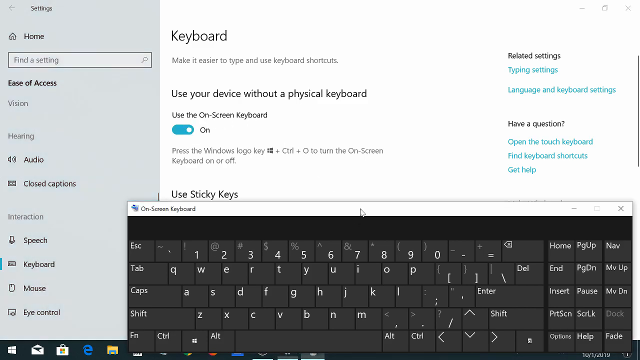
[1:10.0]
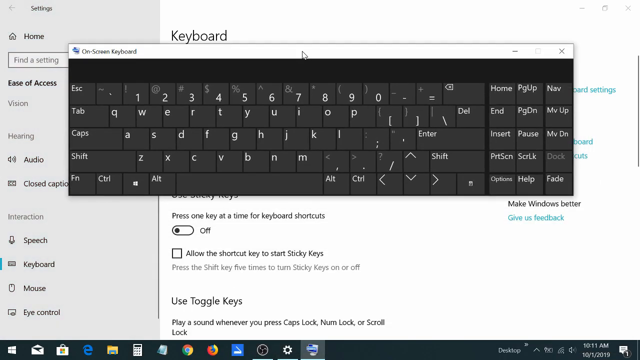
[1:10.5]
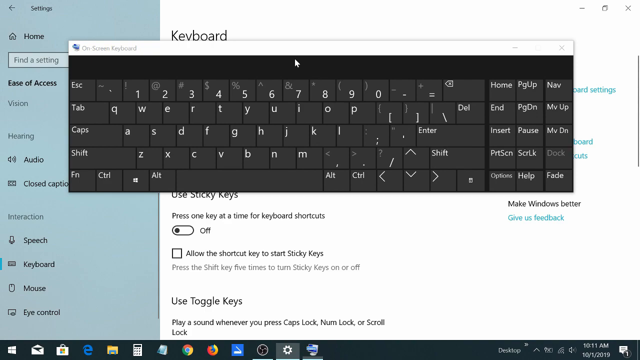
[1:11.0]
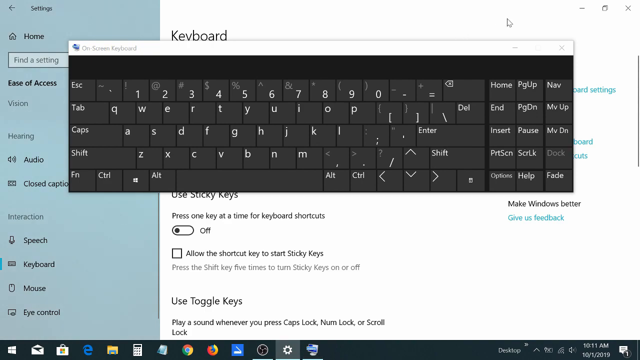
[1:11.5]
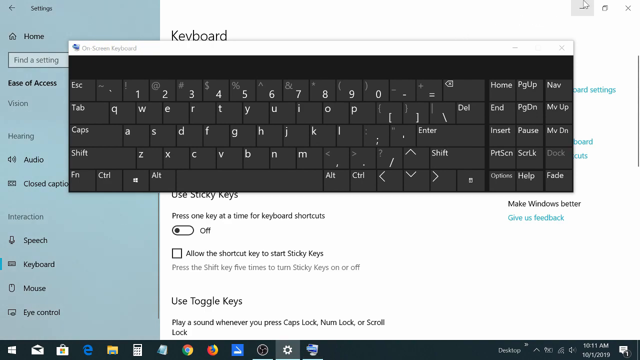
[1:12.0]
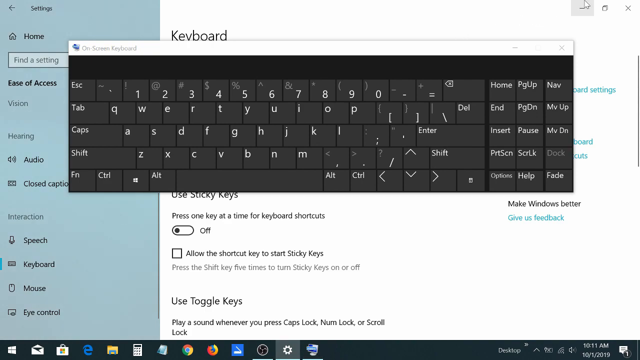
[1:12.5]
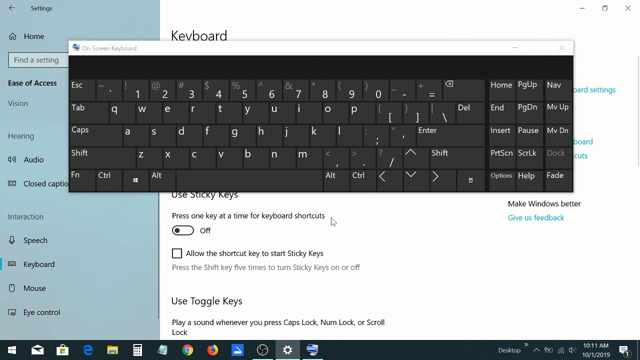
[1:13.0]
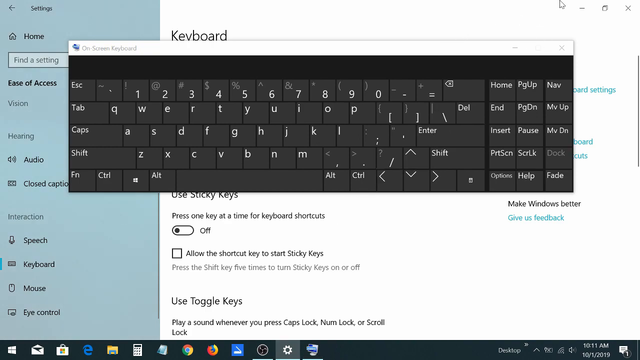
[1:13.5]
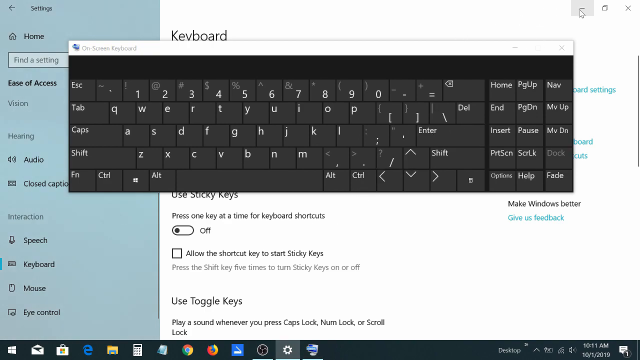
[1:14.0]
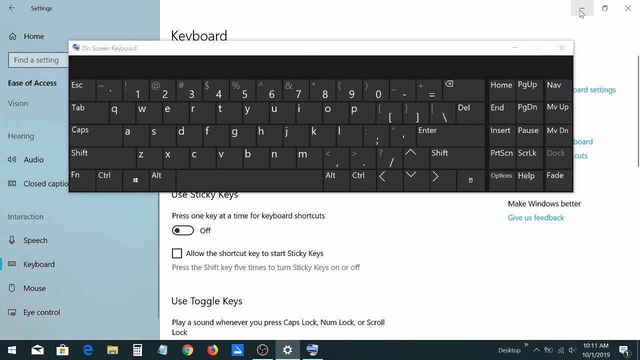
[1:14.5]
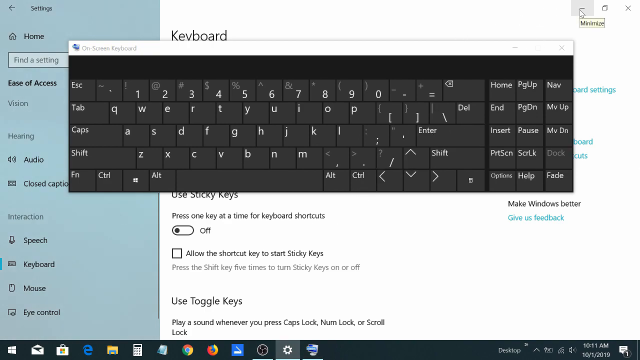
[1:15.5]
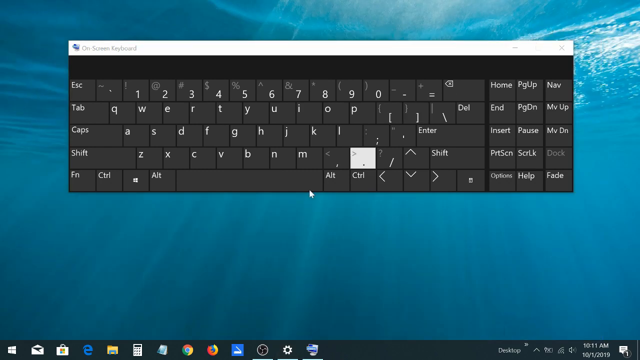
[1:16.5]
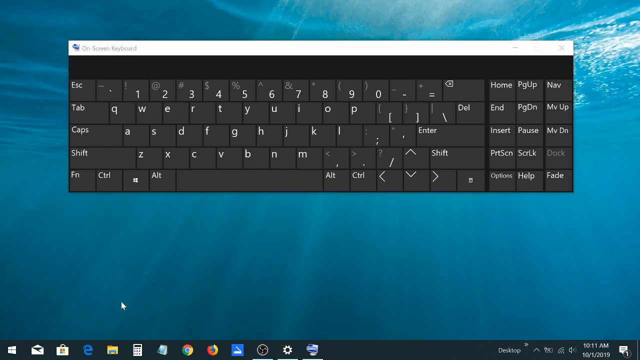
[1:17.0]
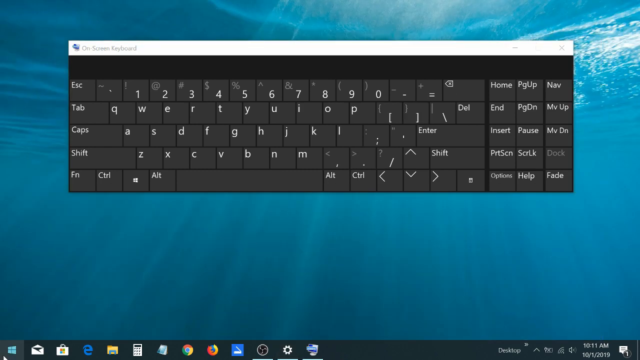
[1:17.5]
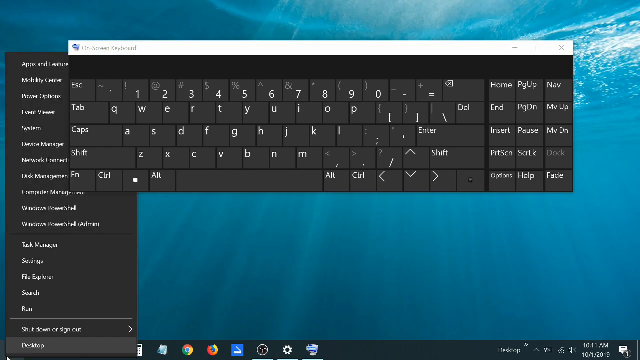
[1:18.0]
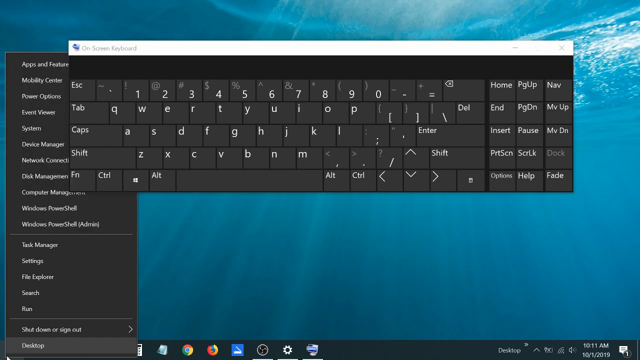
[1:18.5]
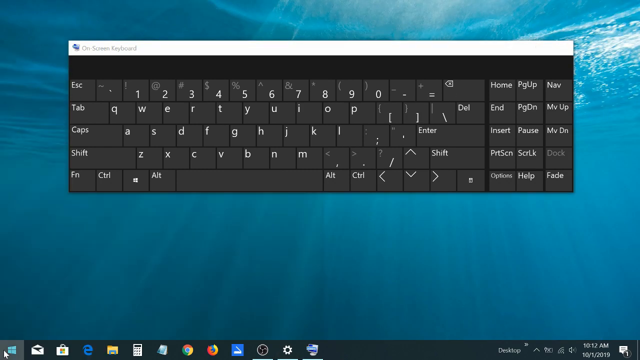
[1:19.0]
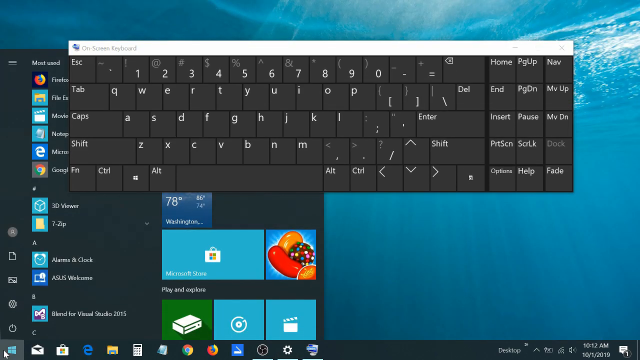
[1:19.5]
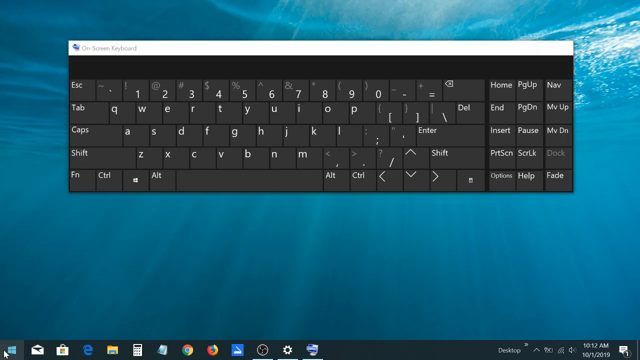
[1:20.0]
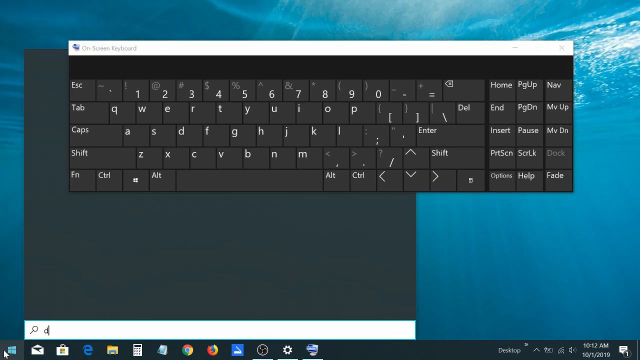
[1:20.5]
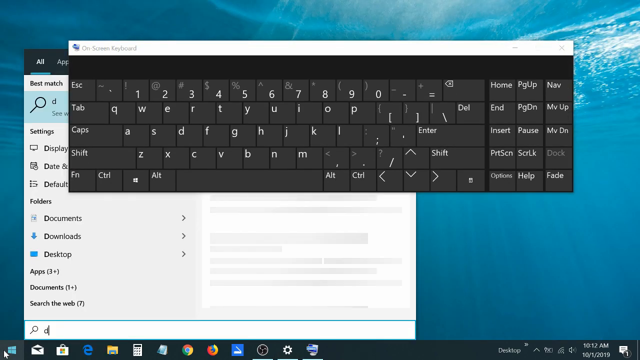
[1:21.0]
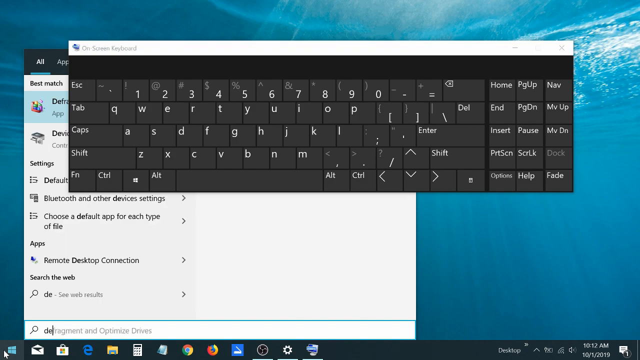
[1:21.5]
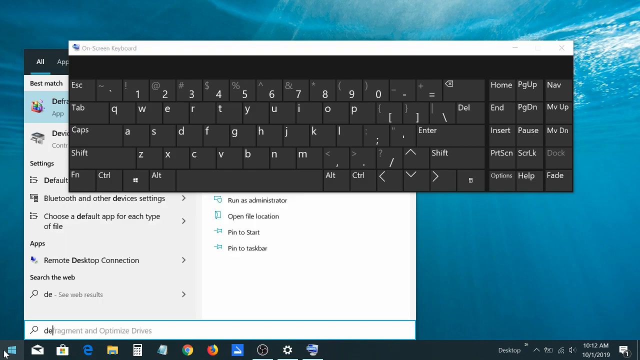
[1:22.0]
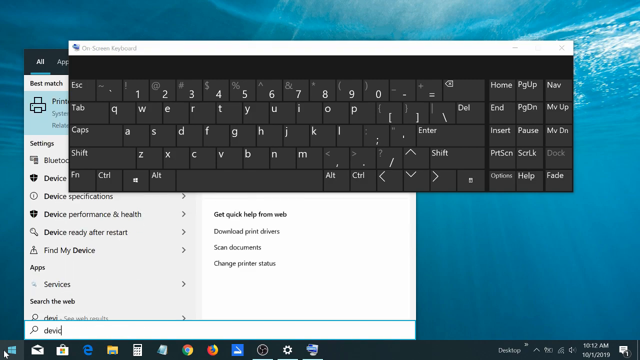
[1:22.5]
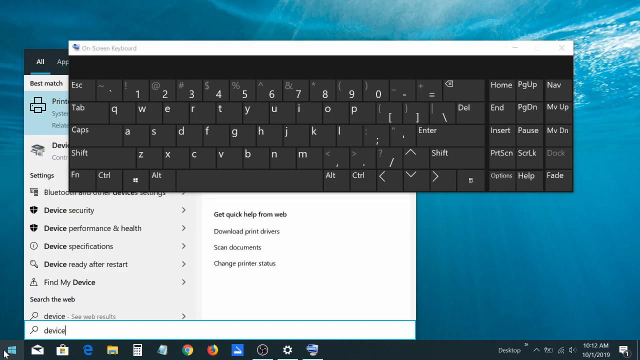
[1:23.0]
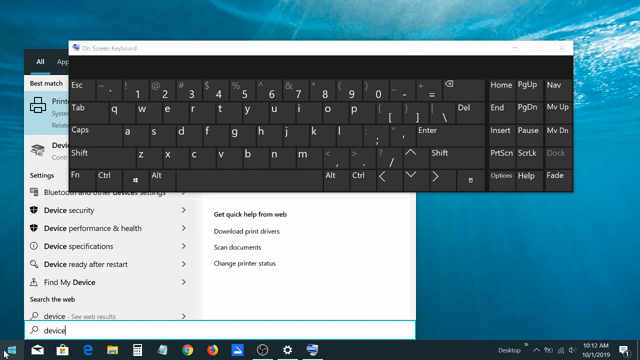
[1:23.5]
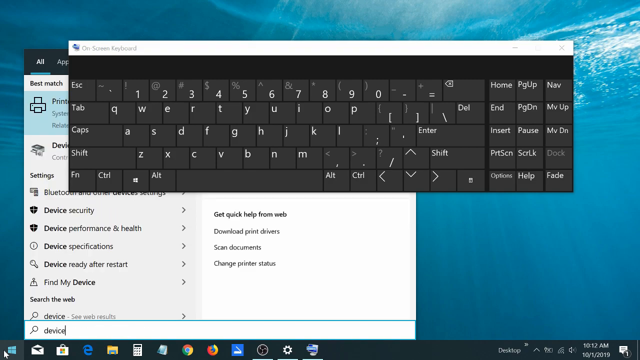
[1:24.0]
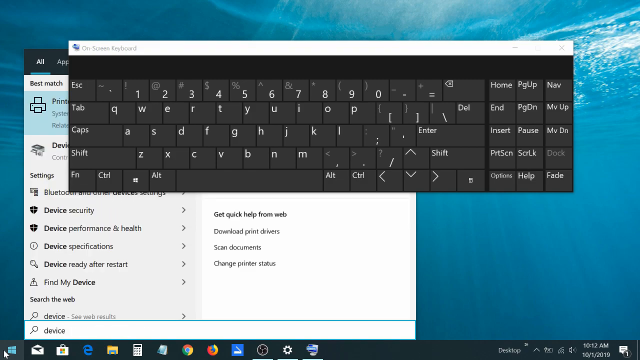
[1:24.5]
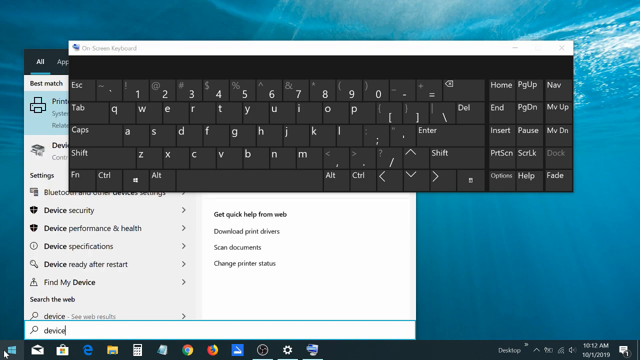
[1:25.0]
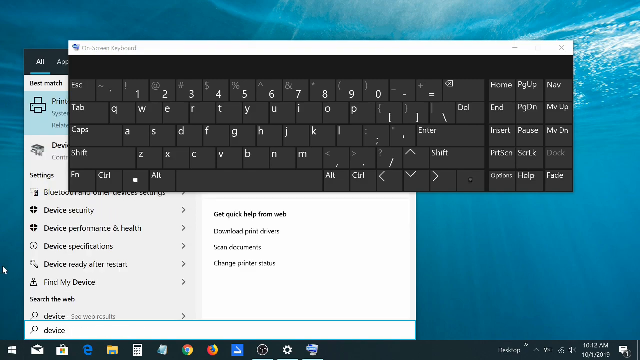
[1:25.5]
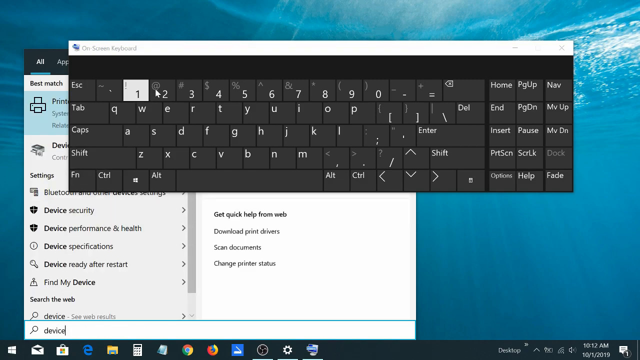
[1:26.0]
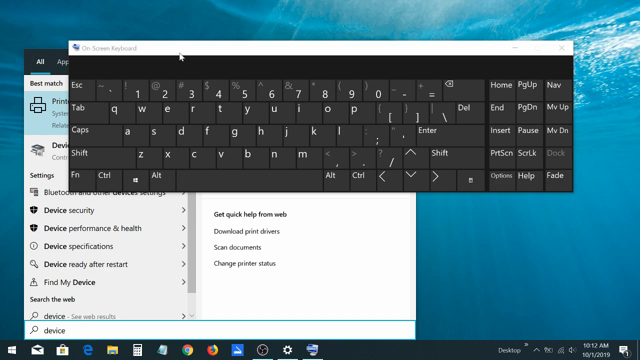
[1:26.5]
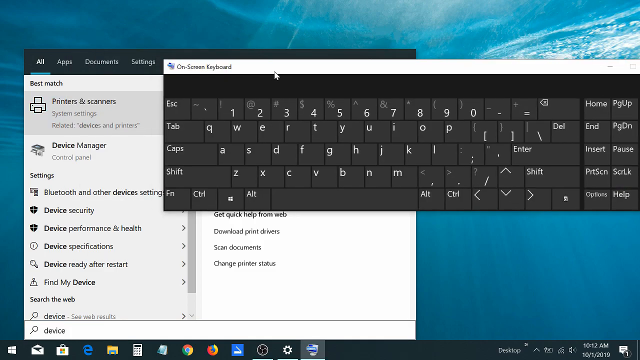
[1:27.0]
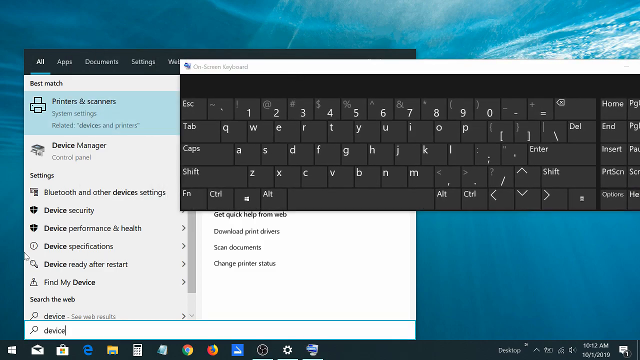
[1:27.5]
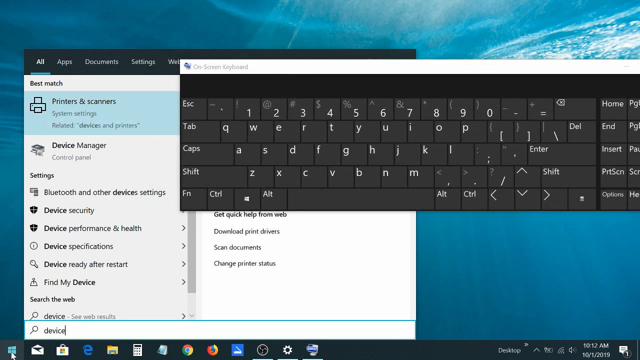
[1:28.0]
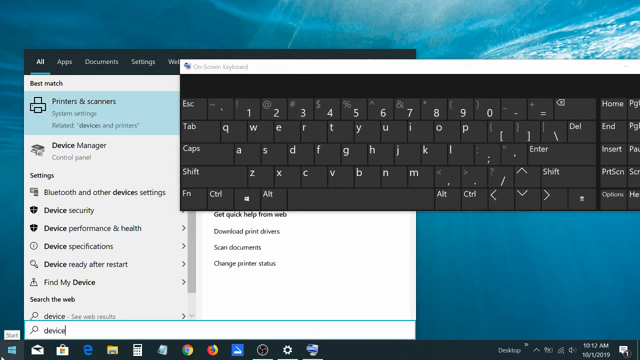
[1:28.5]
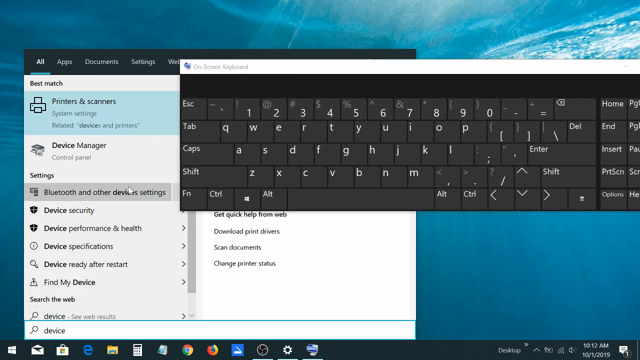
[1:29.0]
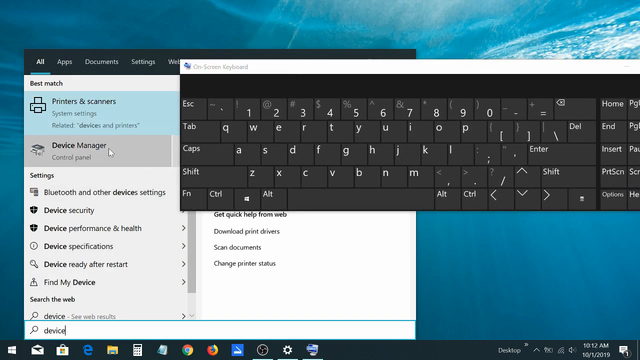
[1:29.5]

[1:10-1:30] Windows settings are still open, blue on the left and white on the right, with the on-screen keyboard showing. The person moves the keyboard back up and leaves it up, then closes the settings and pulls the taskbar back up. The keyboard blocks much of the view. They type in "Device" and apparently go to pull up Device Manager.